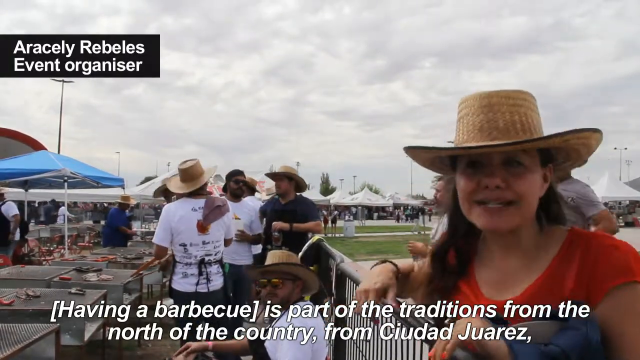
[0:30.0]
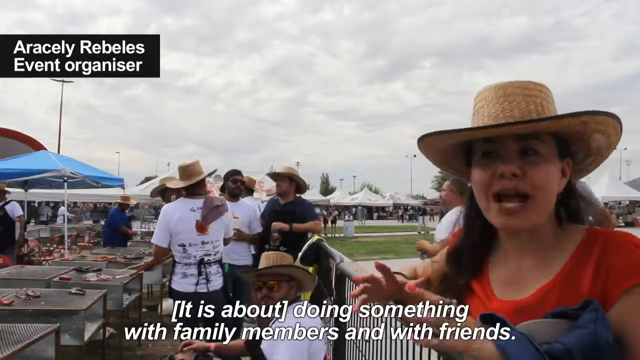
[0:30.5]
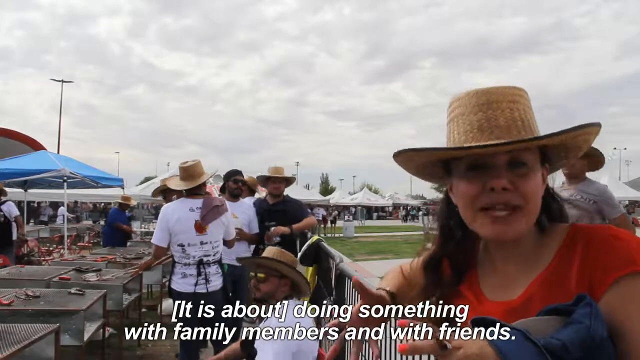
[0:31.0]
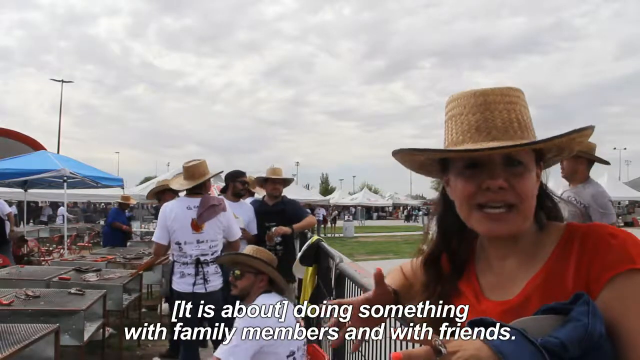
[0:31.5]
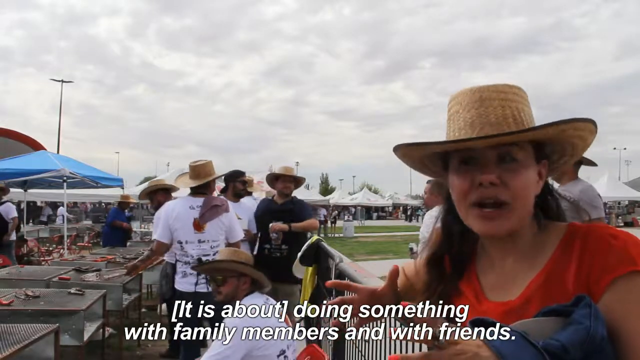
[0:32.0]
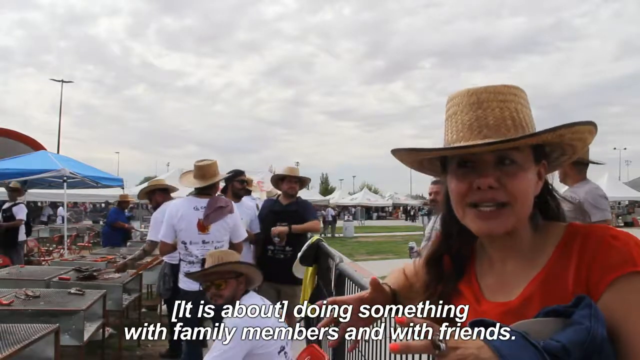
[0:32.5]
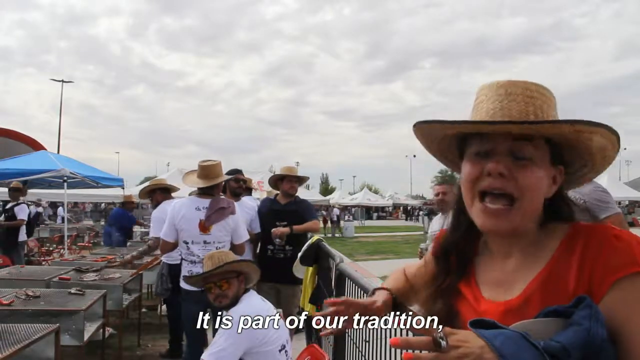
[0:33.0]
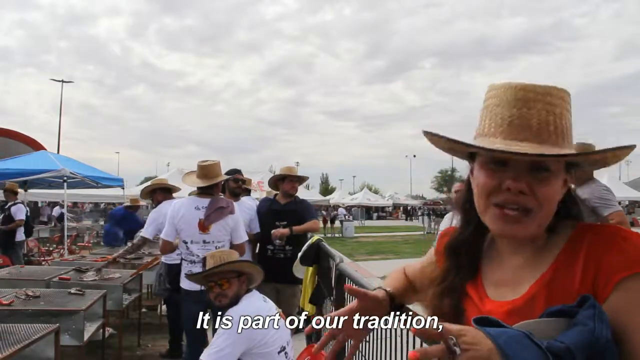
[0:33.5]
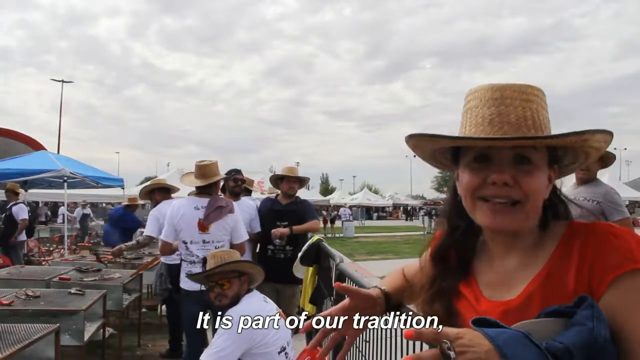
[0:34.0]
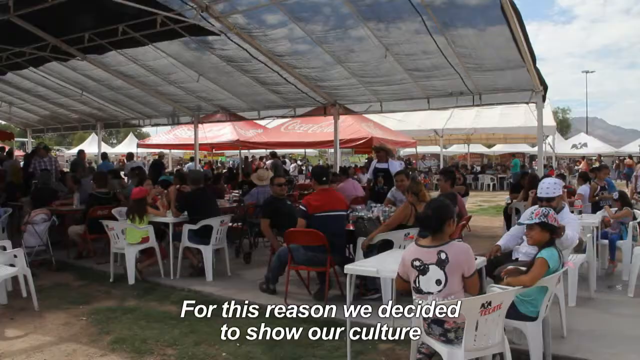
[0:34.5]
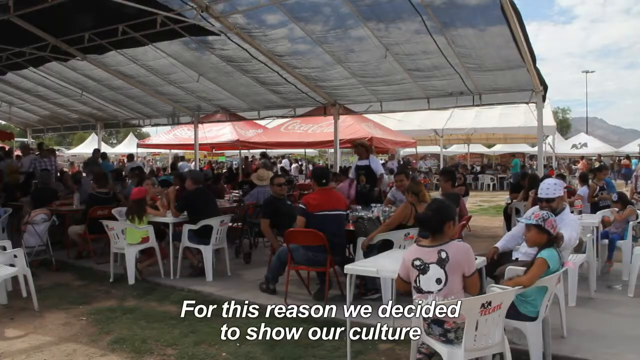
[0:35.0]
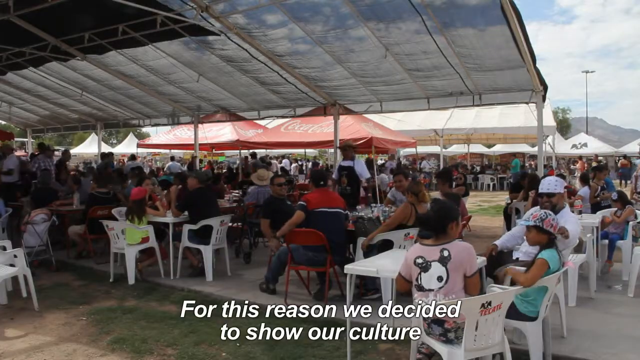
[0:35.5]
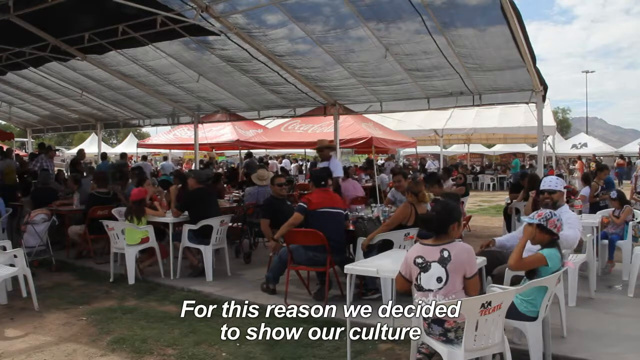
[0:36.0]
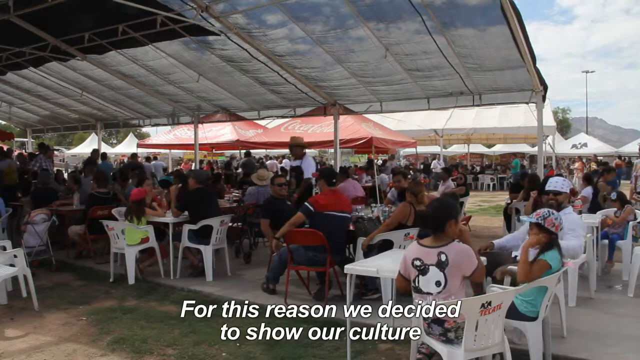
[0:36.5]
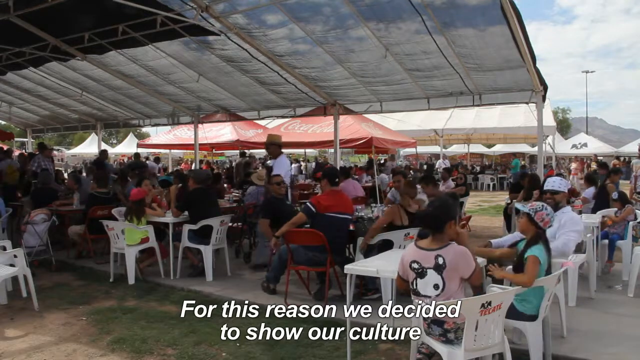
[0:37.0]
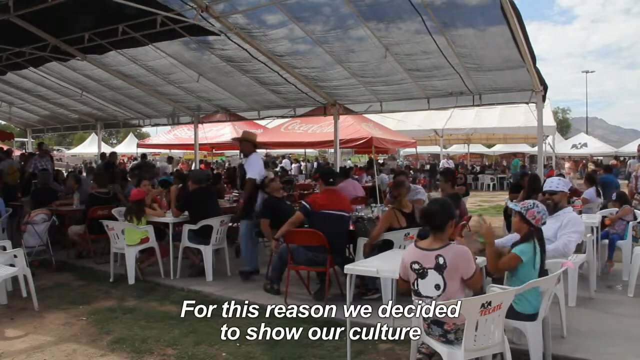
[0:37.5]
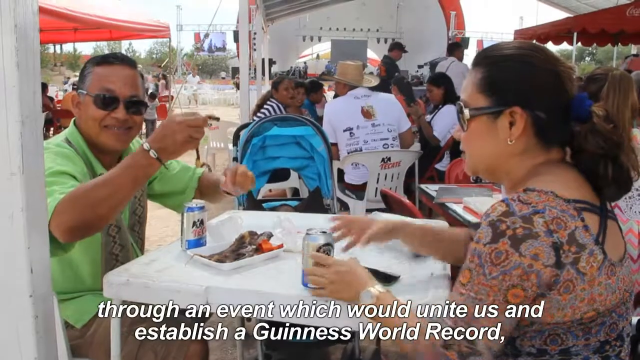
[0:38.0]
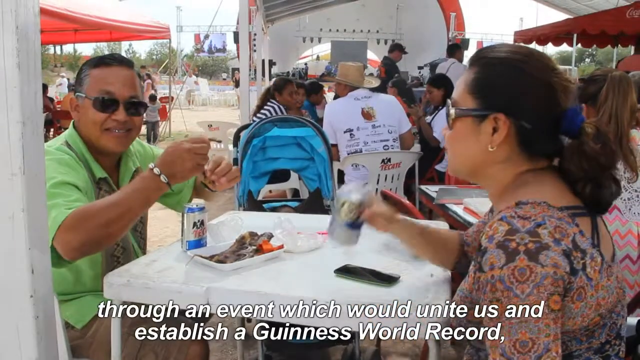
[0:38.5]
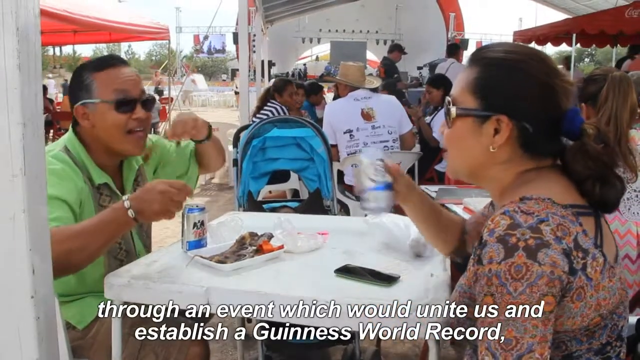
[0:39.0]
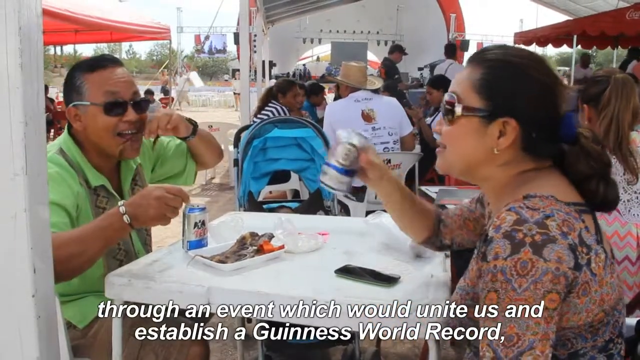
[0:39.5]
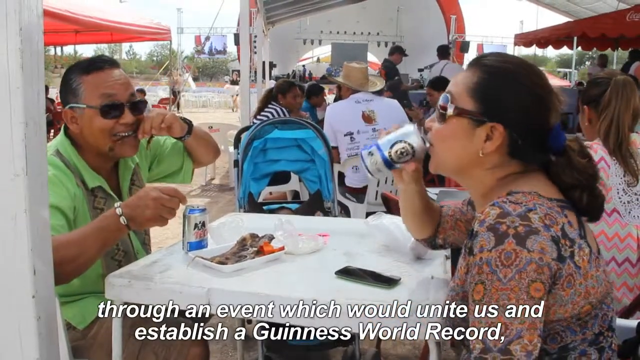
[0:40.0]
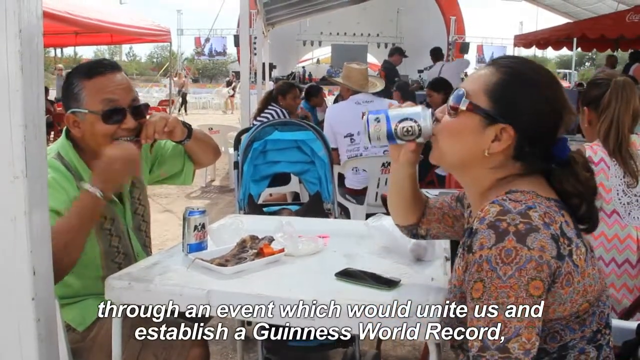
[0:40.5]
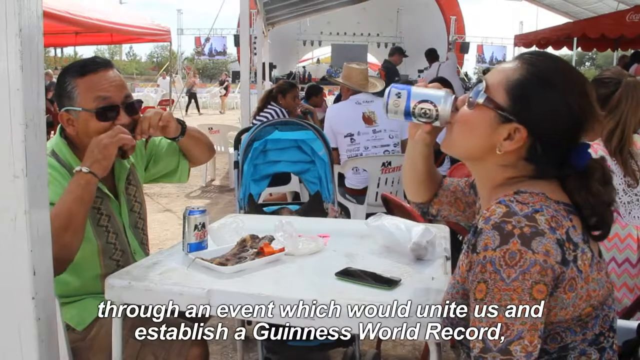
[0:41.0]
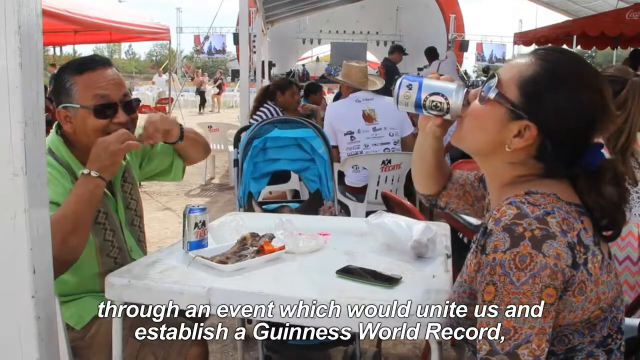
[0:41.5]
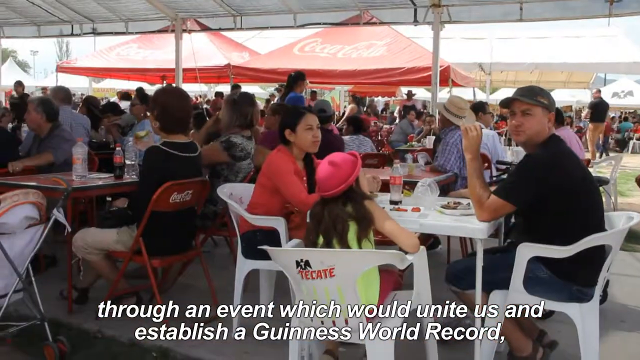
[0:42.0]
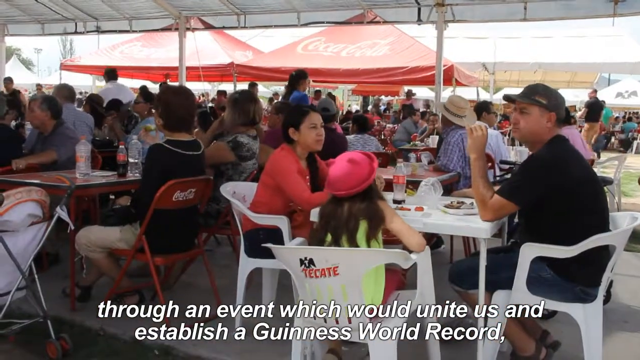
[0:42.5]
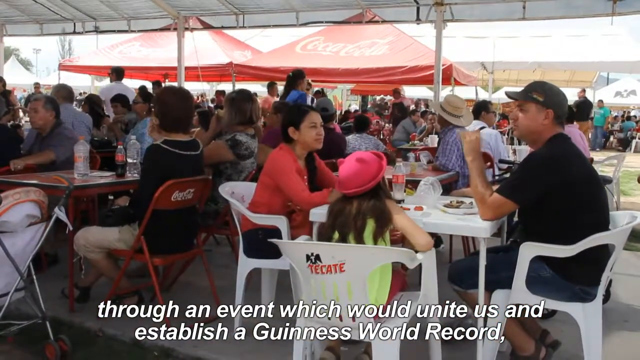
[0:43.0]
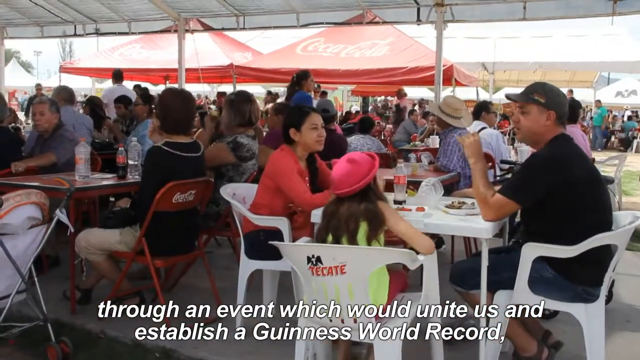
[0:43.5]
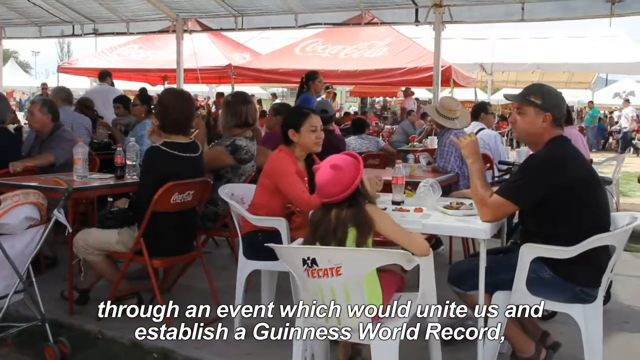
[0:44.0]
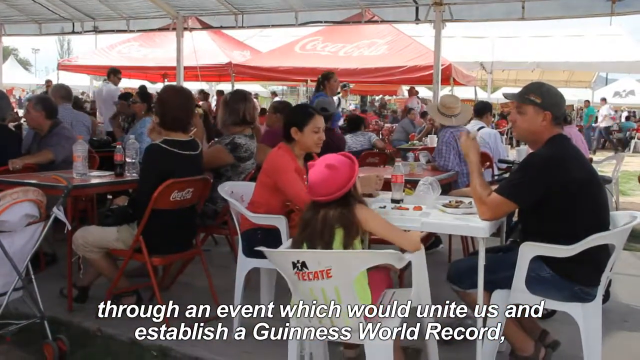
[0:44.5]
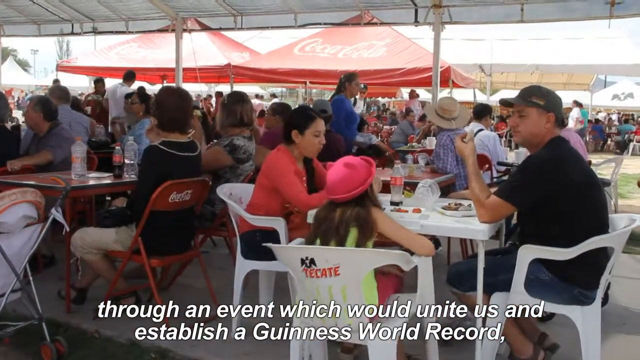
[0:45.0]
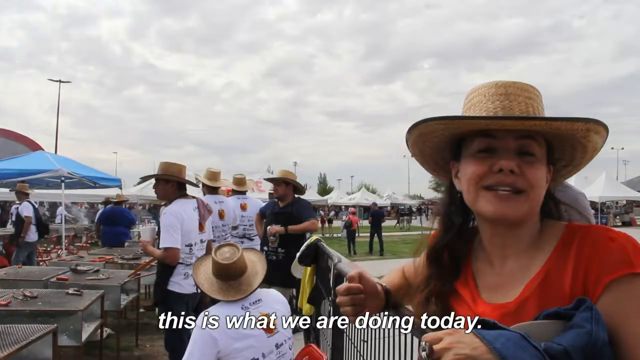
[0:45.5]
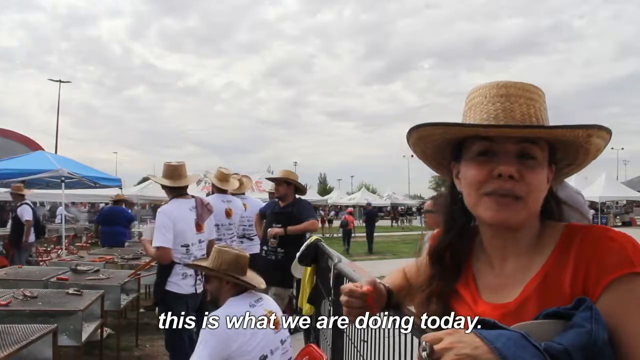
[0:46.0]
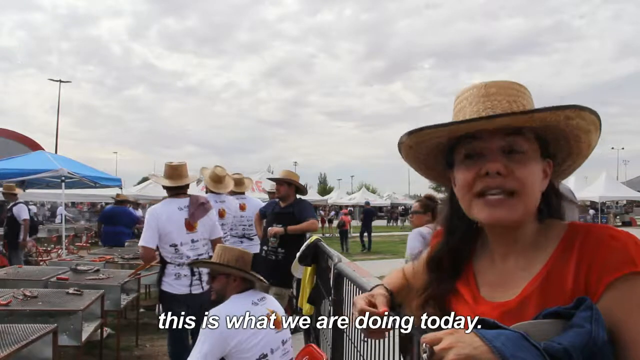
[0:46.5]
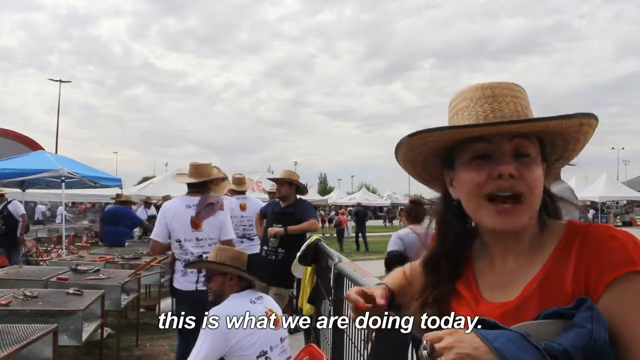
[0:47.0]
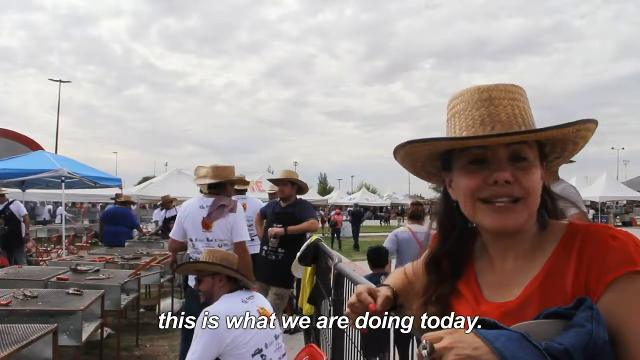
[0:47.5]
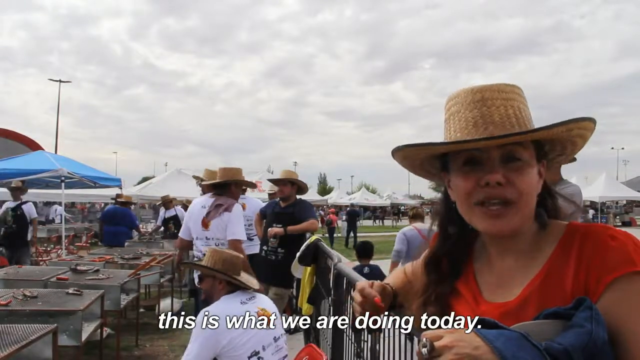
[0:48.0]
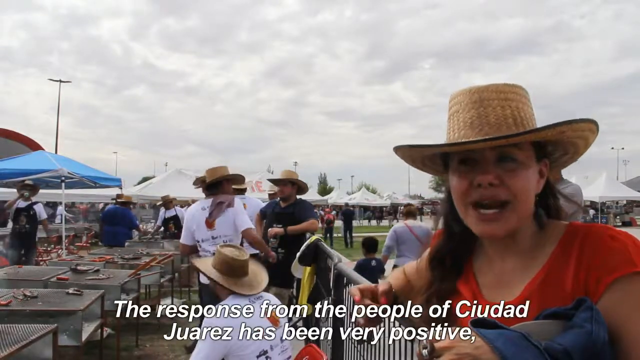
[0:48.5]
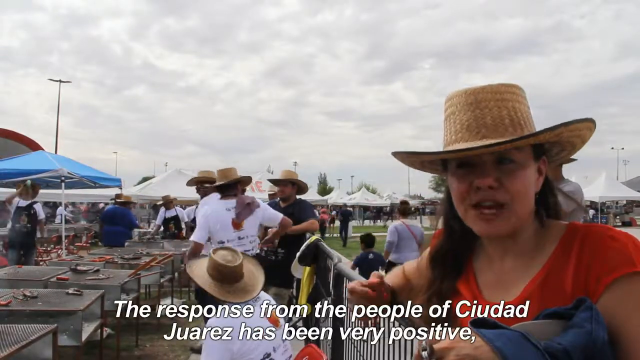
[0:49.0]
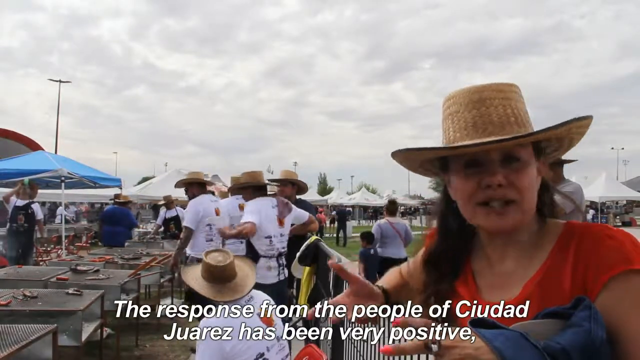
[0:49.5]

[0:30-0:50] The large barbecue event in Mexico continues with the event organiser, Aracely Rebelles, who says it is about doing something with family members and with friends. To her right, men in hats barbecue at the vast number of barbecue grills. The video then cuts to an indoor tent area with lots of white seating, where lots of people sit having drinks and eating meat and vegetables. Aracely goes on to say that for this reason they decided to show their culture through an event which would unite them and establish their Guinness World Record. Lots of people come together to eat and enjoy the food while trying to break a record, with lots of families and friends gathered to share the event. She goes on to say that this is what they are doing today and that the response from the people of Ciudad Juarez has been very positive.